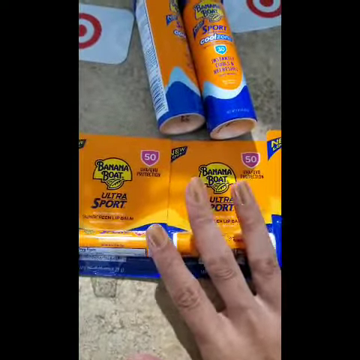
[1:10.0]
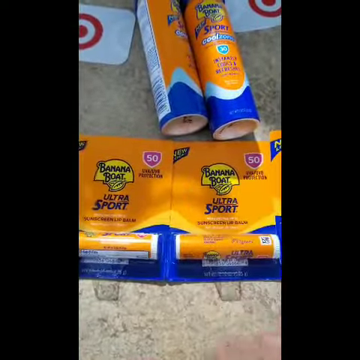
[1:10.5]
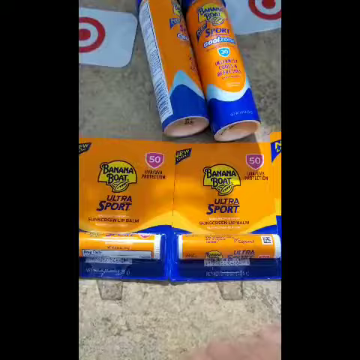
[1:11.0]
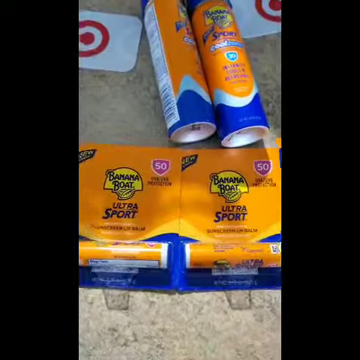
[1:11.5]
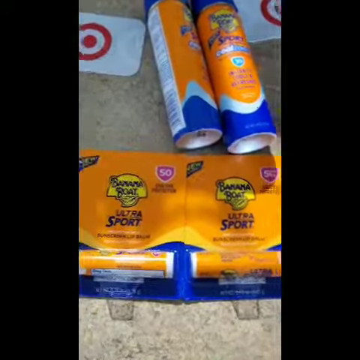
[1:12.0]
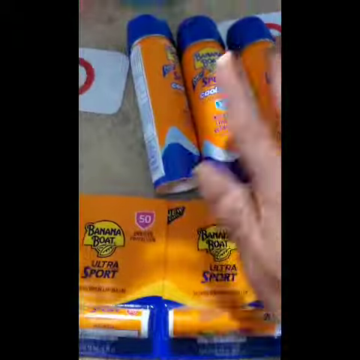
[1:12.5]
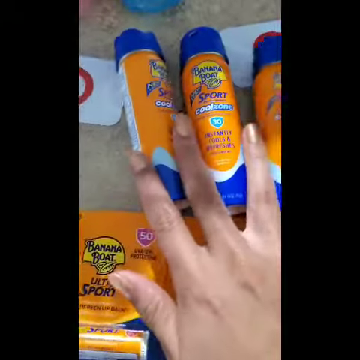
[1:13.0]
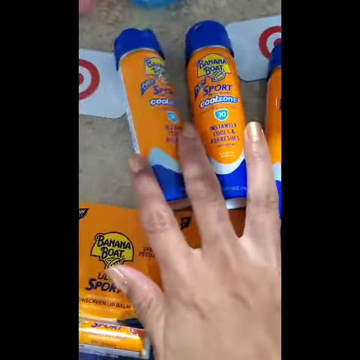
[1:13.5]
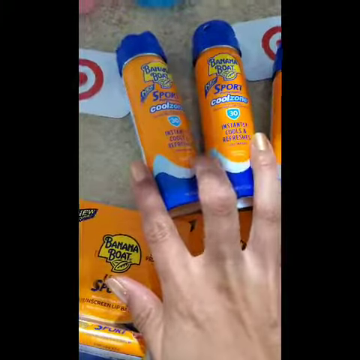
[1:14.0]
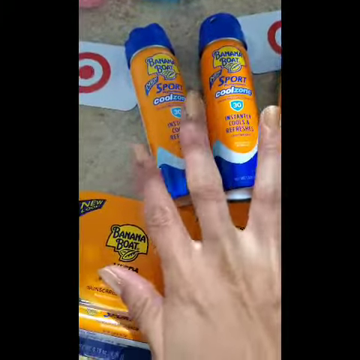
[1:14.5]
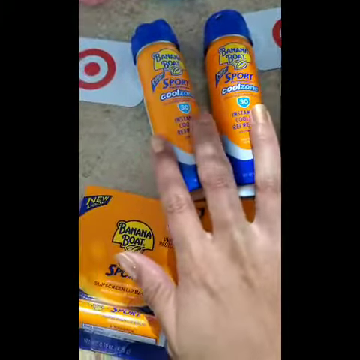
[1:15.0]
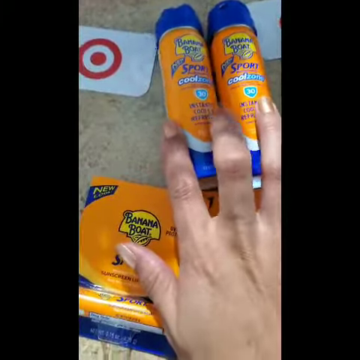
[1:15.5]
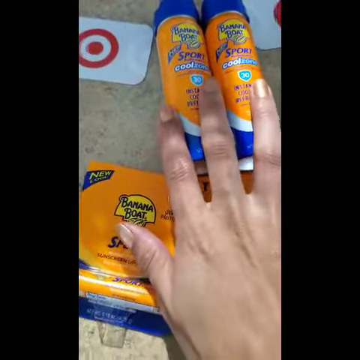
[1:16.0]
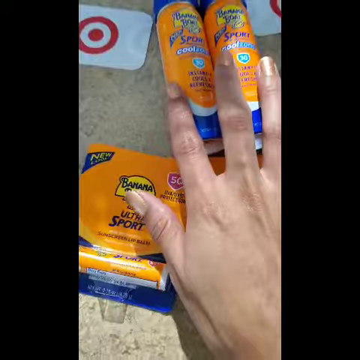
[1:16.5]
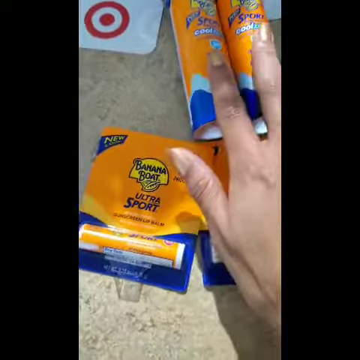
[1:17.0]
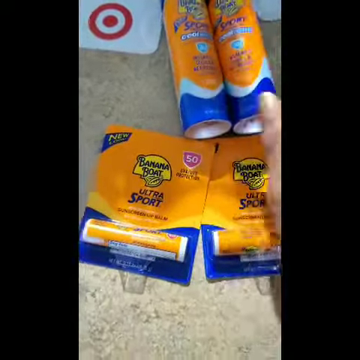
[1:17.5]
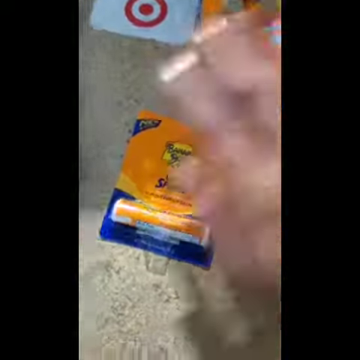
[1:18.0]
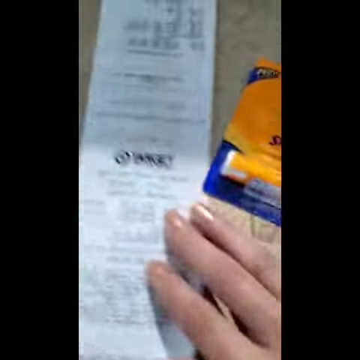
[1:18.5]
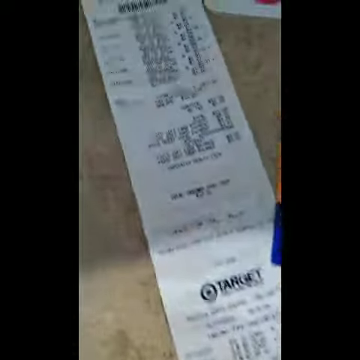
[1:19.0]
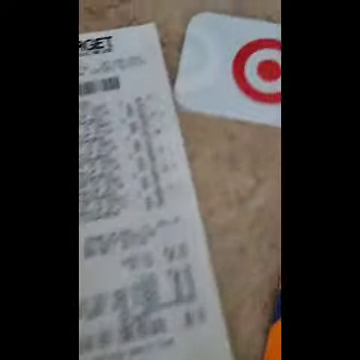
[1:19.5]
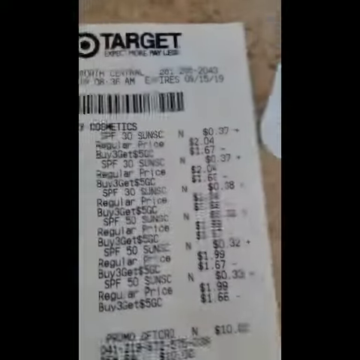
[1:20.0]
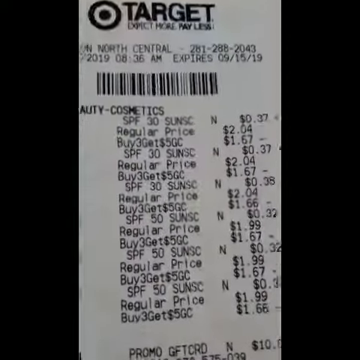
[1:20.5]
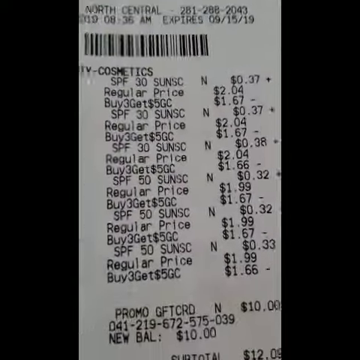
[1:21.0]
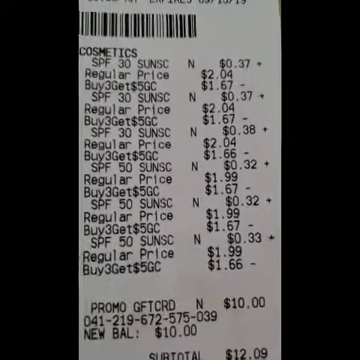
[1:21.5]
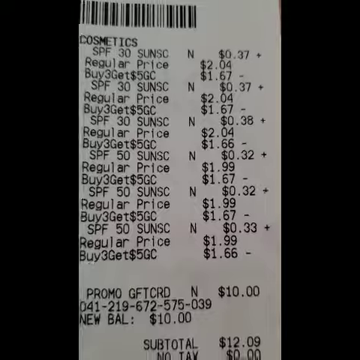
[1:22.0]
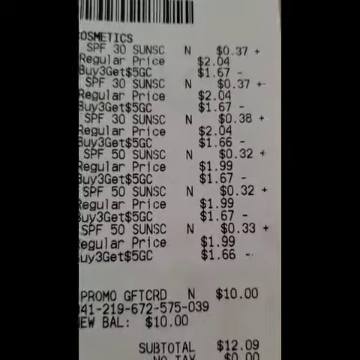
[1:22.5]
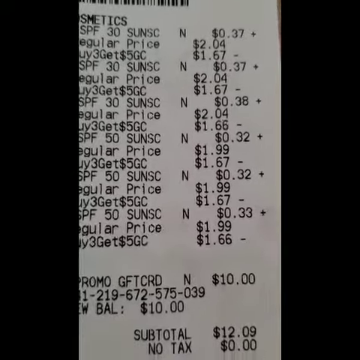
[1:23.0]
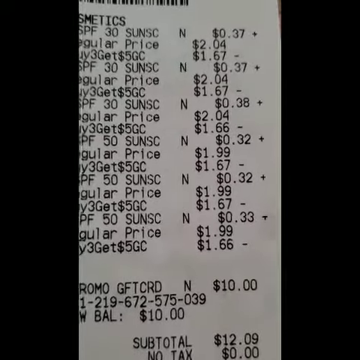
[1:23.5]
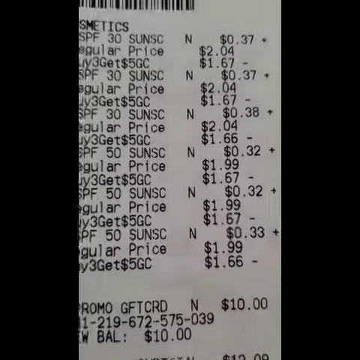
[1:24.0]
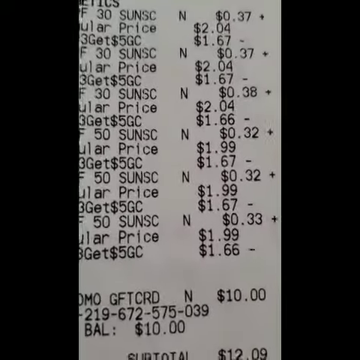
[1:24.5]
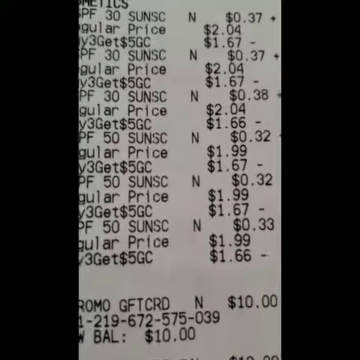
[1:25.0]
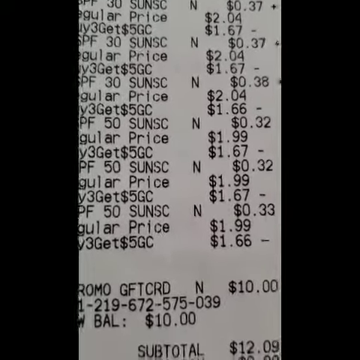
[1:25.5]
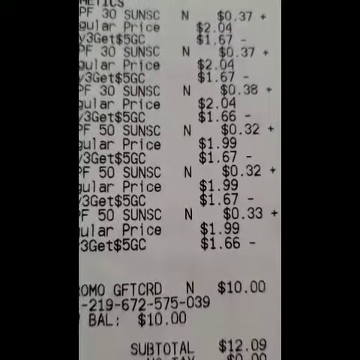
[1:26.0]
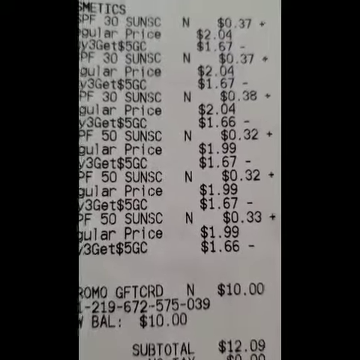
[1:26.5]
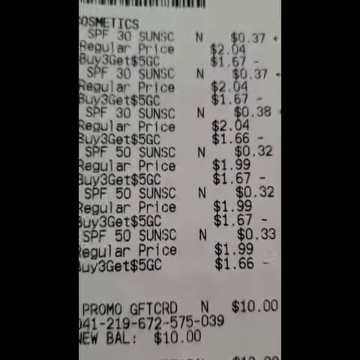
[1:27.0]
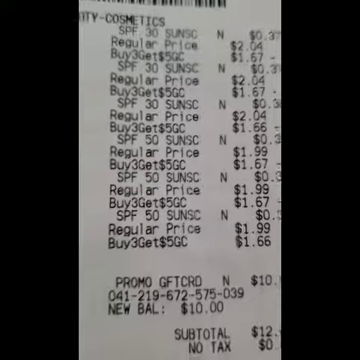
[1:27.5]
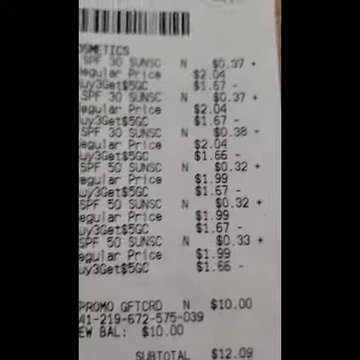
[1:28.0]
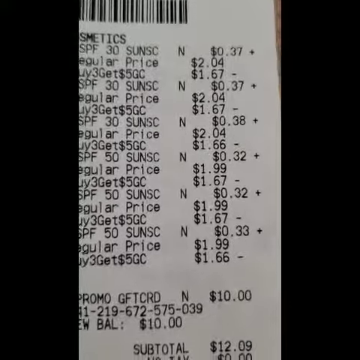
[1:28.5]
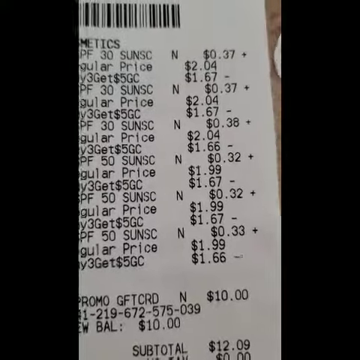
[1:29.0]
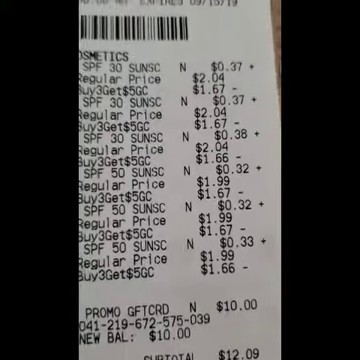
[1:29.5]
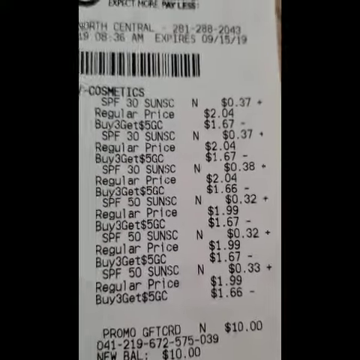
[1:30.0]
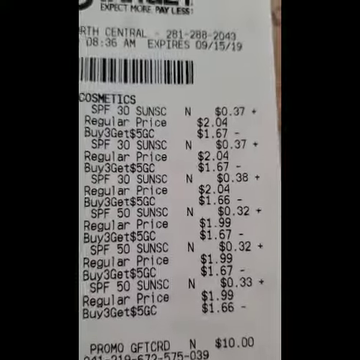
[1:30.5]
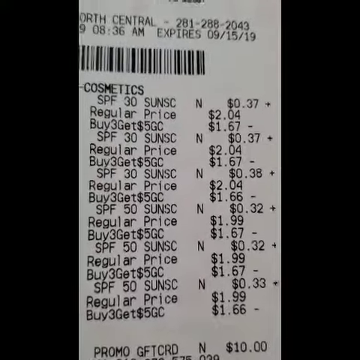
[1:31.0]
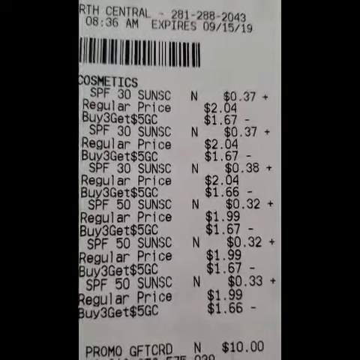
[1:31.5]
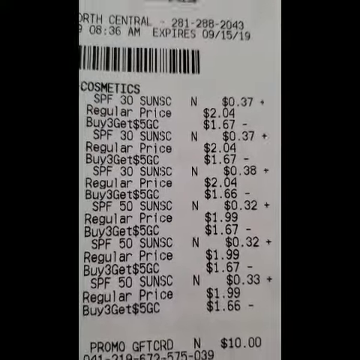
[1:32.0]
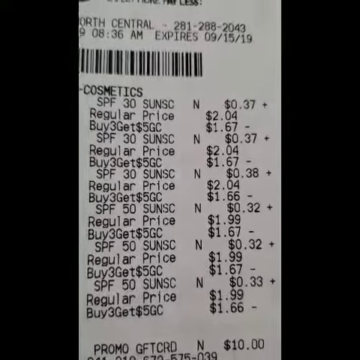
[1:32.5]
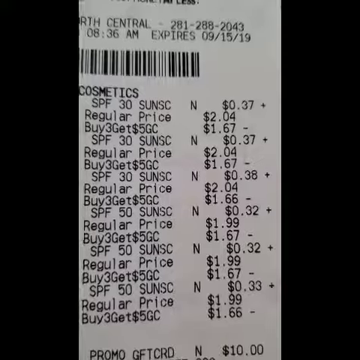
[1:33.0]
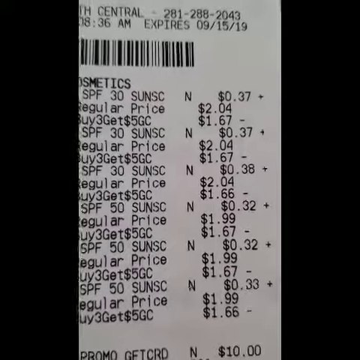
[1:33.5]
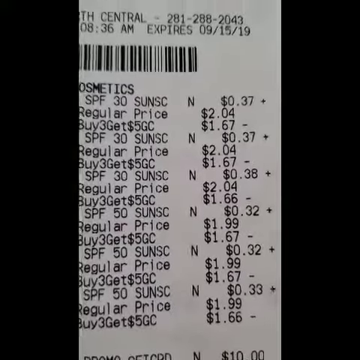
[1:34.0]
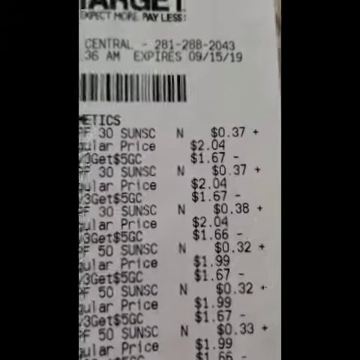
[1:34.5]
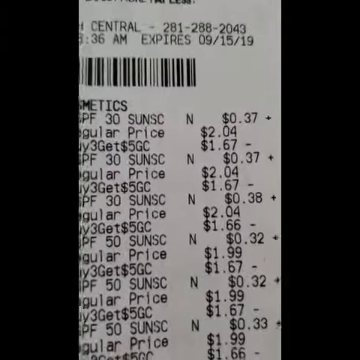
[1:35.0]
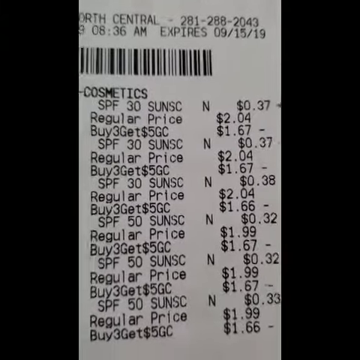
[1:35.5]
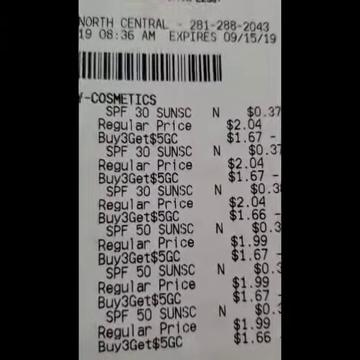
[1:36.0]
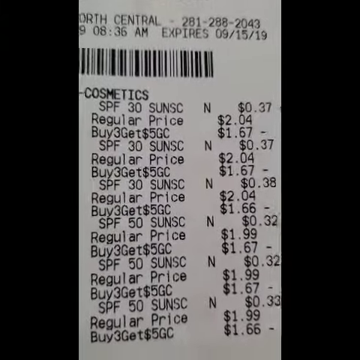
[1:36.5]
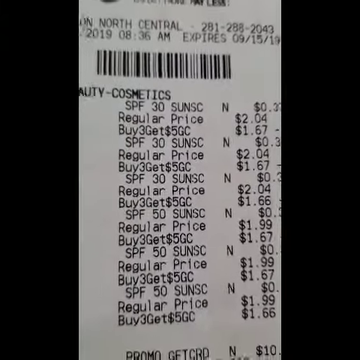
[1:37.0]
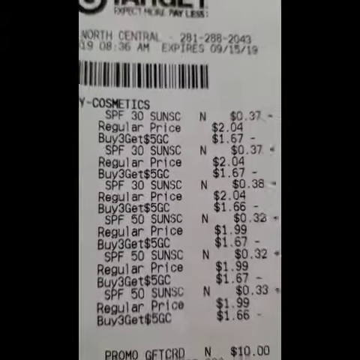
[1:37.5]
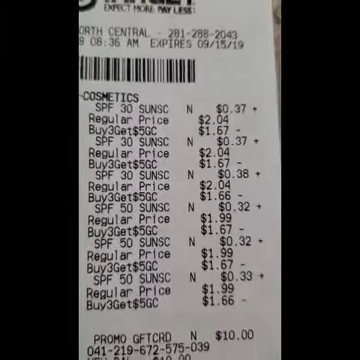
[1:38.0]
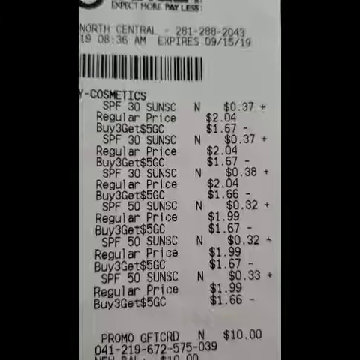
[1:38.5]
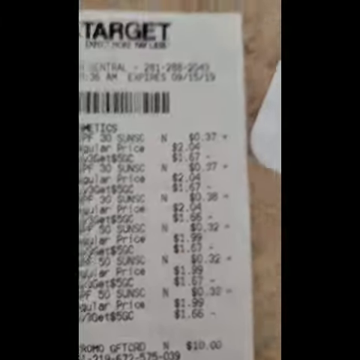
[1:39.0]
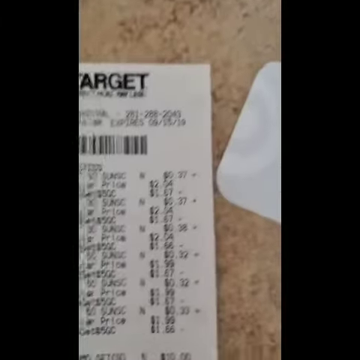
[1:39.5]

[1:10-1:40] The shot begins still on the Banana Boat Ultra Sport sunscreen lip balms, and the camera pans up to show the aerosol cans of Banana Boat Sport sunscreen as well. A card in the upper left and right that appears to be a Target gift card is still visible. The camera then pans over to a Target receipt showing all the purchases of these sunscreens and their prices. Listed on the left side of the receipt is a sale: buy three and get five dollars. This suggests the buyer received two gift cards totaling ten dollars, likely the gift cards in the upper corners seen earlier. The camera zooms in on the receipt a bit, showing the prices.